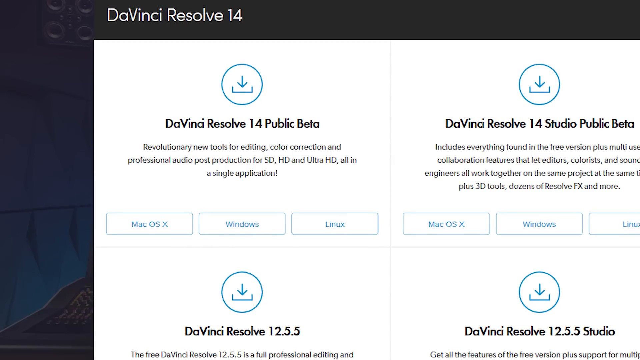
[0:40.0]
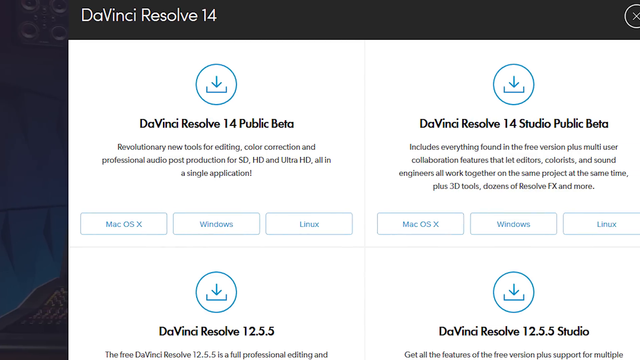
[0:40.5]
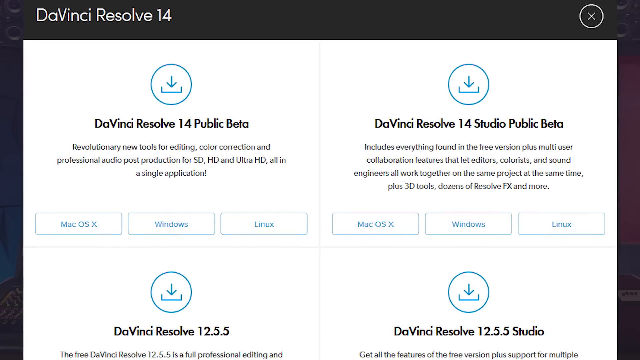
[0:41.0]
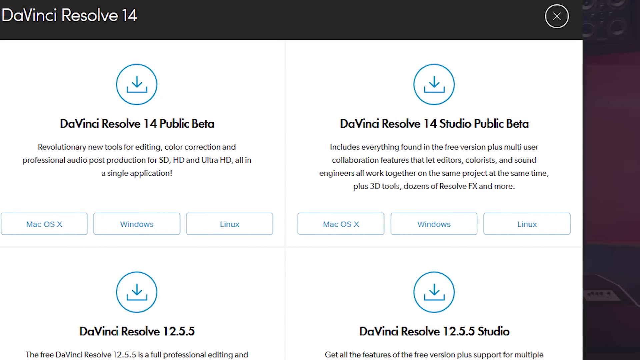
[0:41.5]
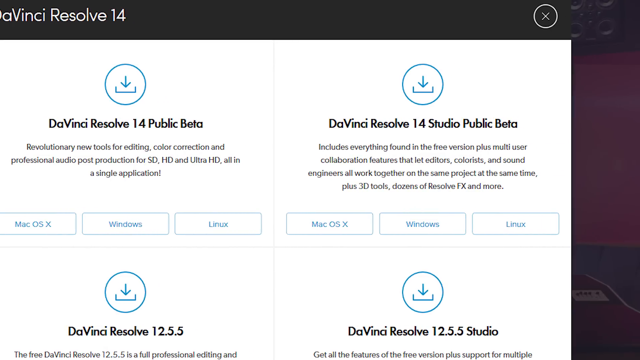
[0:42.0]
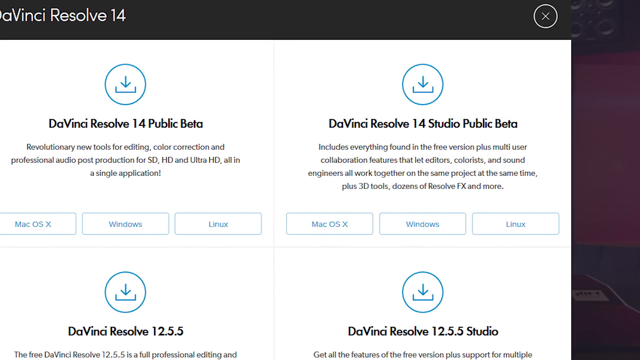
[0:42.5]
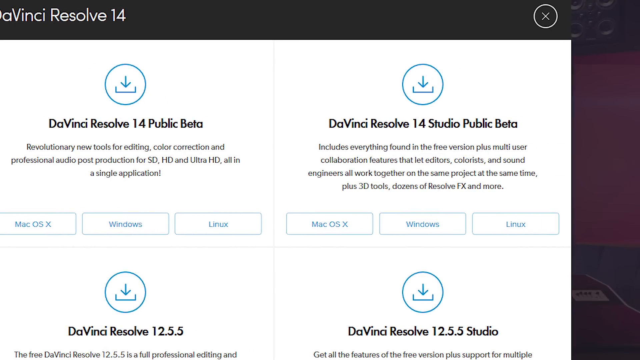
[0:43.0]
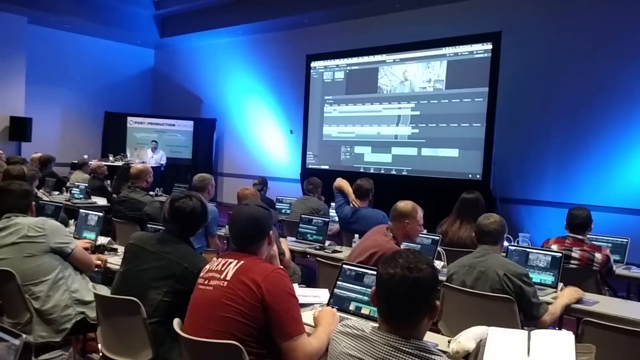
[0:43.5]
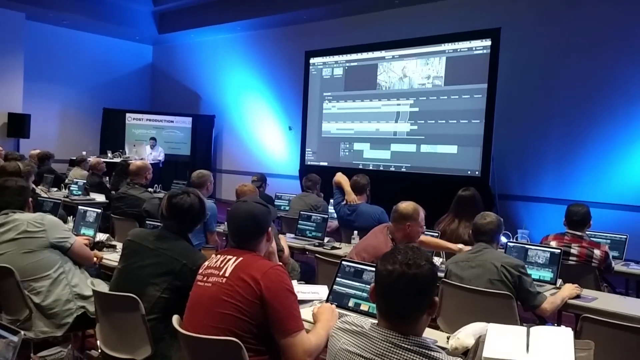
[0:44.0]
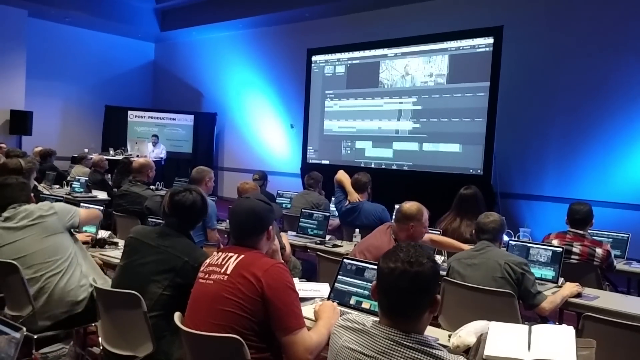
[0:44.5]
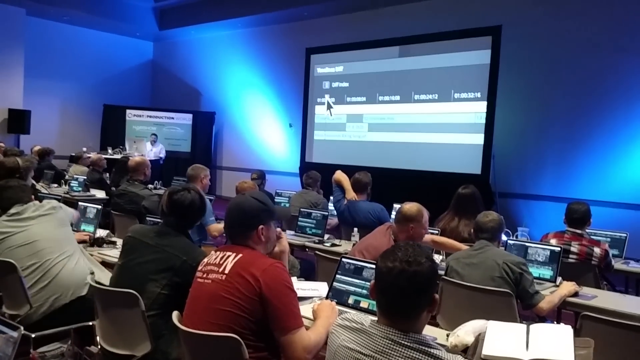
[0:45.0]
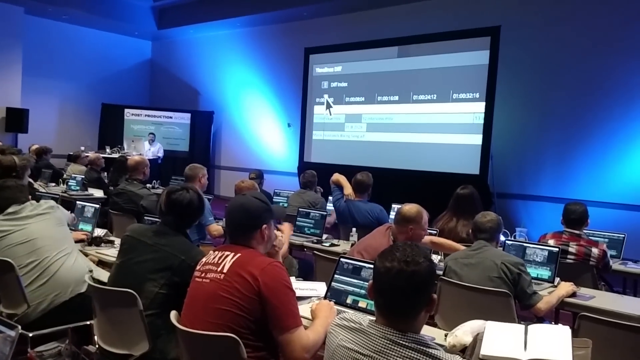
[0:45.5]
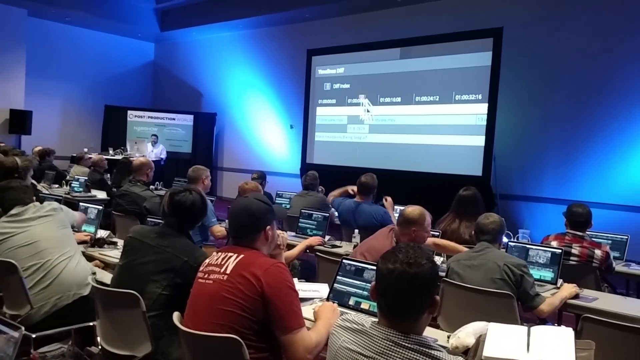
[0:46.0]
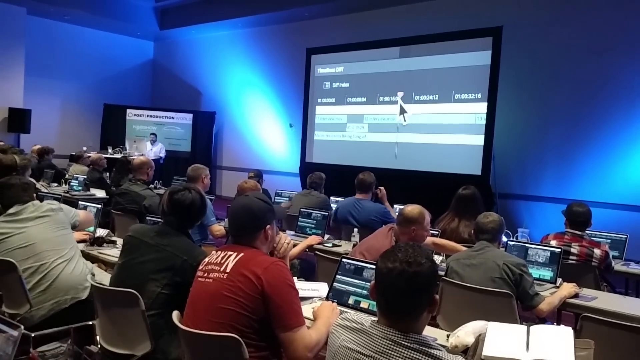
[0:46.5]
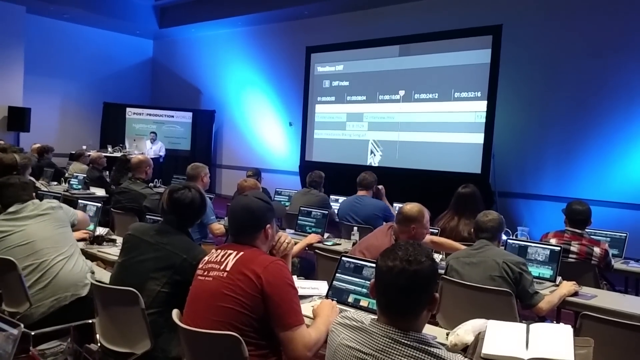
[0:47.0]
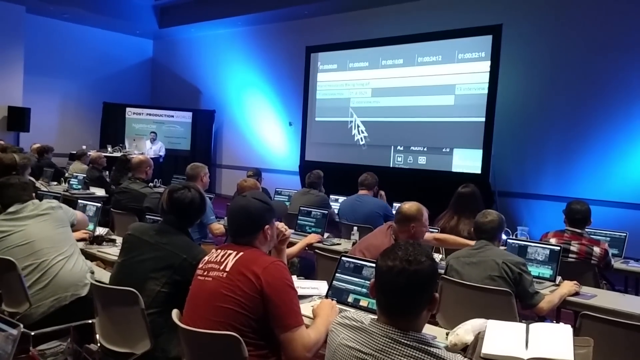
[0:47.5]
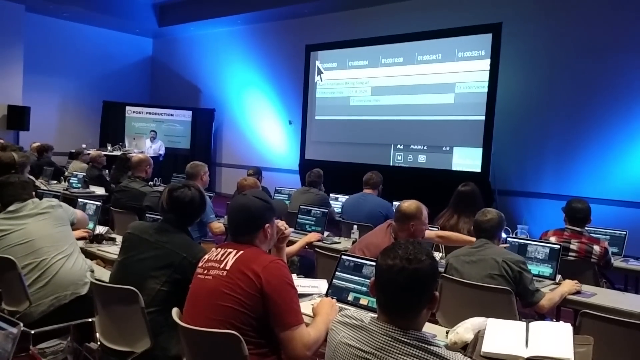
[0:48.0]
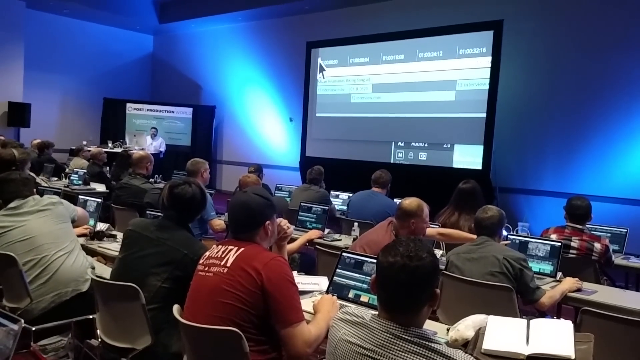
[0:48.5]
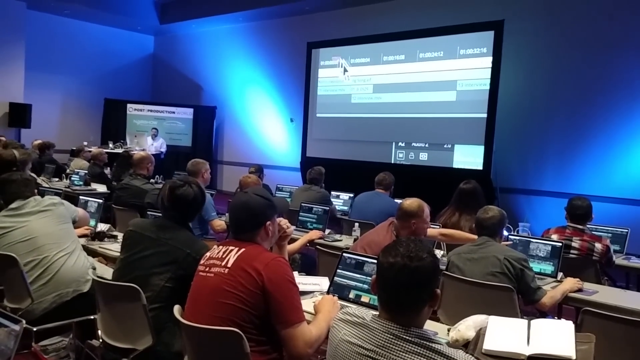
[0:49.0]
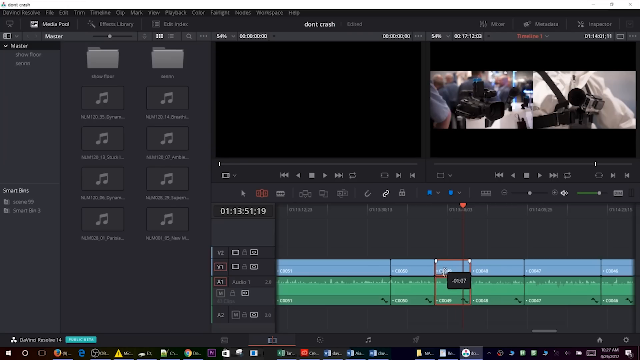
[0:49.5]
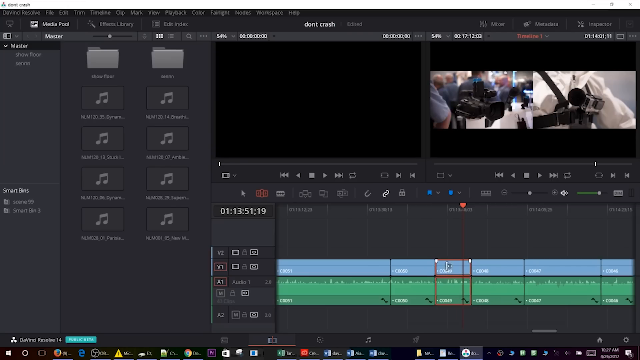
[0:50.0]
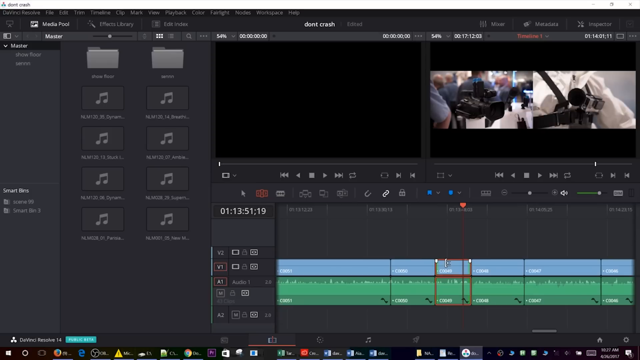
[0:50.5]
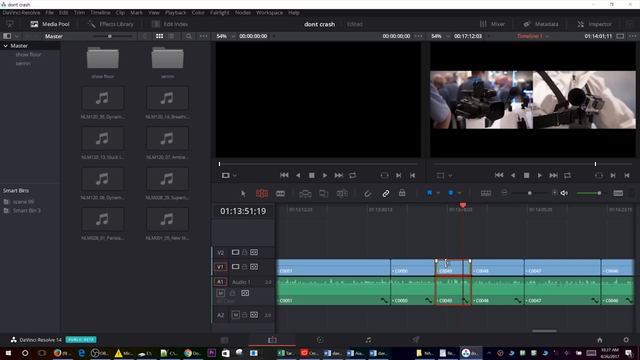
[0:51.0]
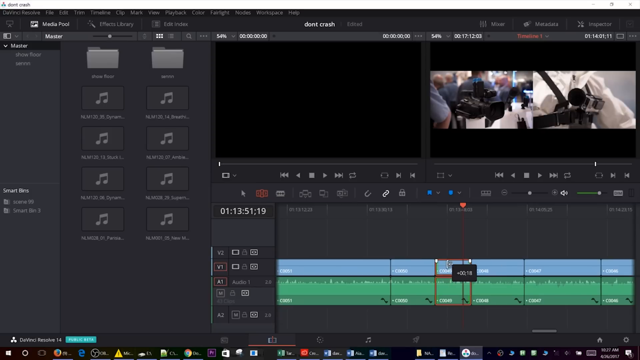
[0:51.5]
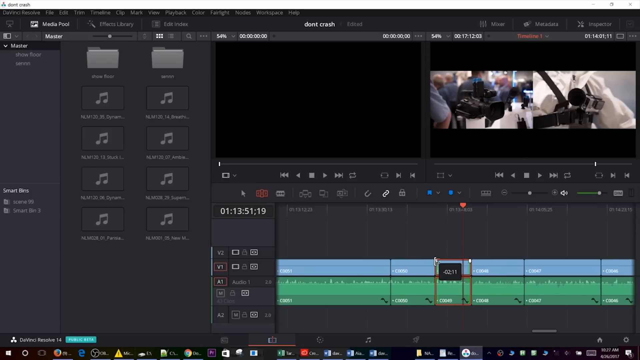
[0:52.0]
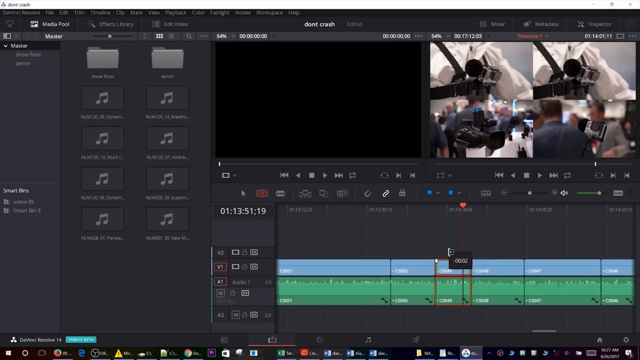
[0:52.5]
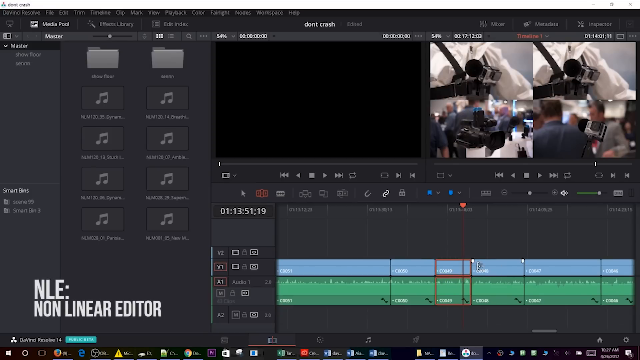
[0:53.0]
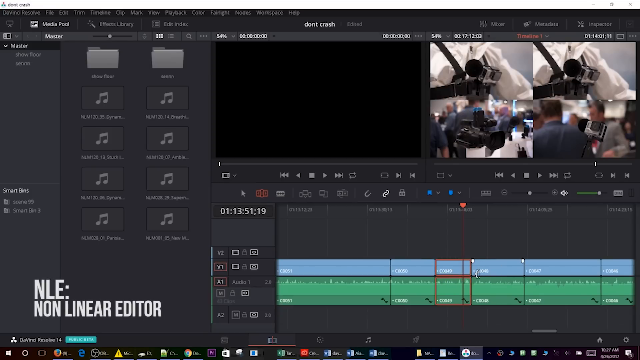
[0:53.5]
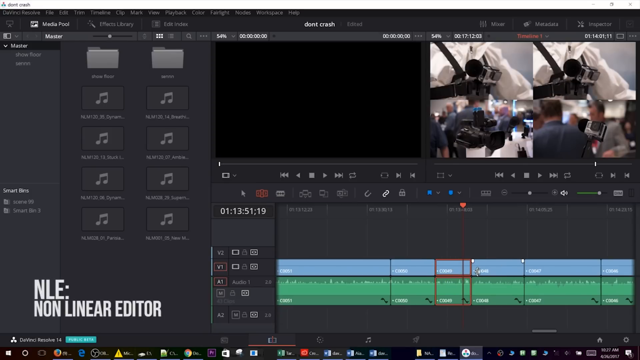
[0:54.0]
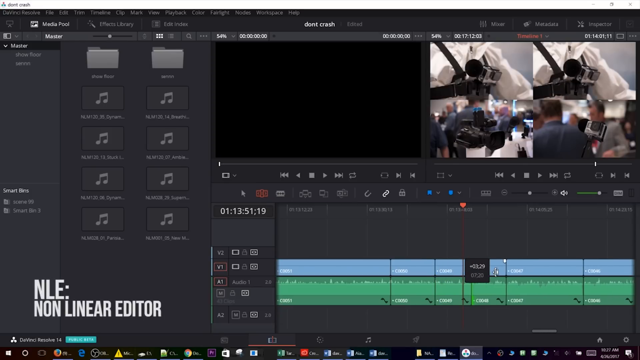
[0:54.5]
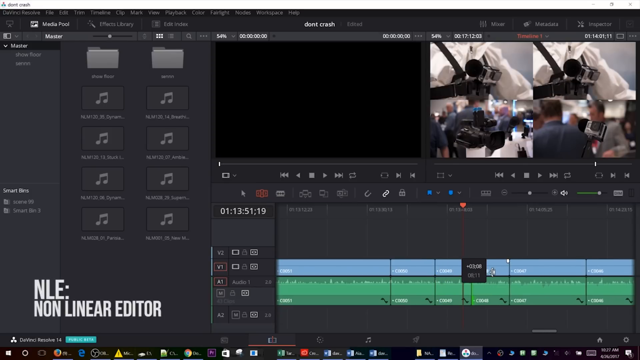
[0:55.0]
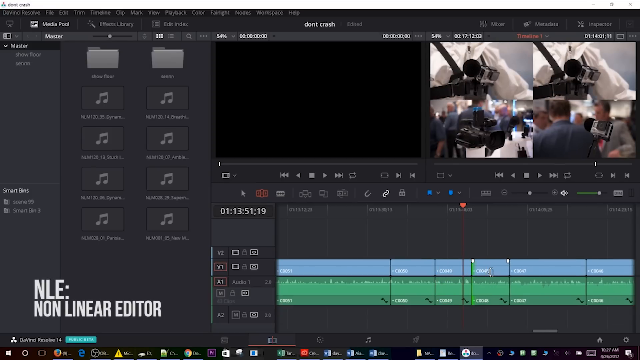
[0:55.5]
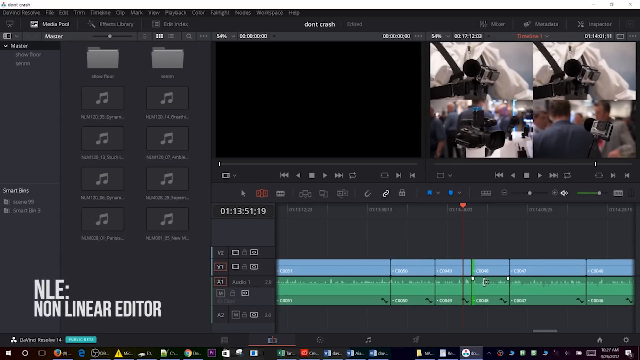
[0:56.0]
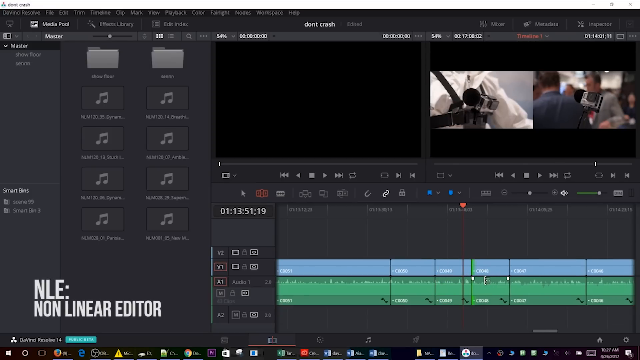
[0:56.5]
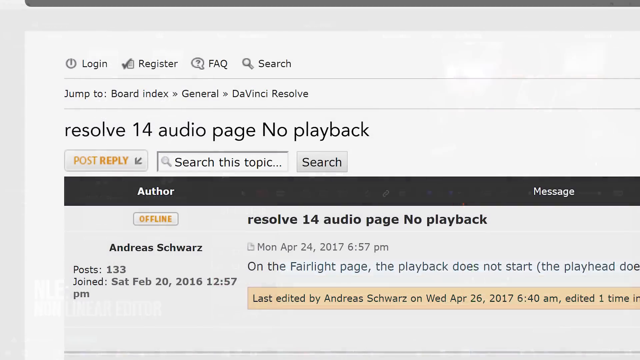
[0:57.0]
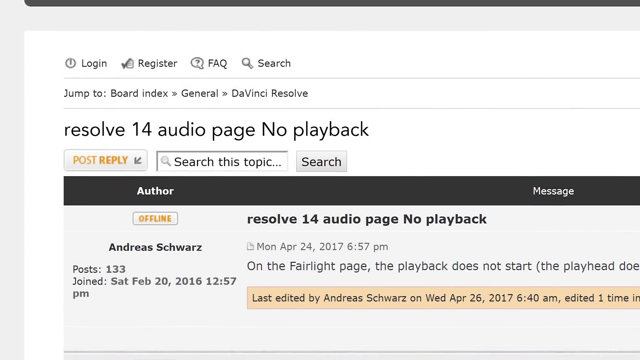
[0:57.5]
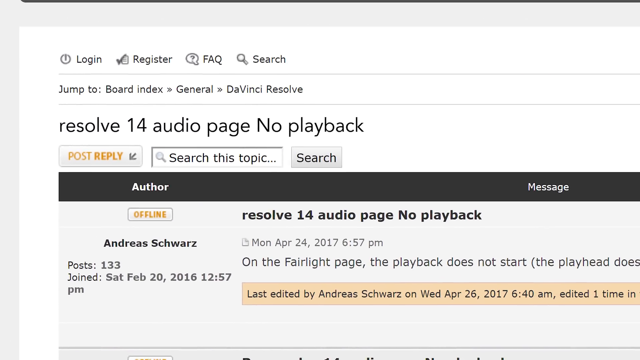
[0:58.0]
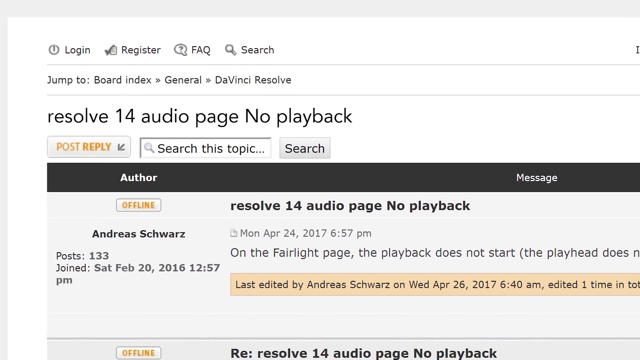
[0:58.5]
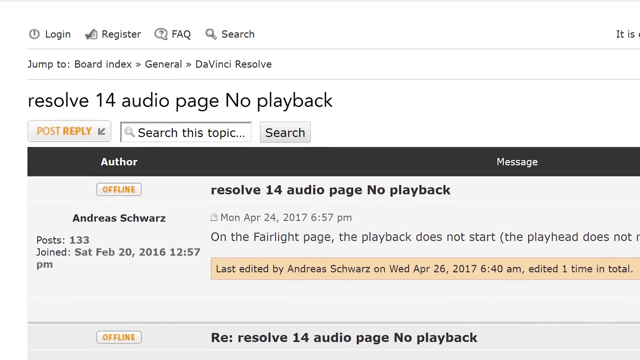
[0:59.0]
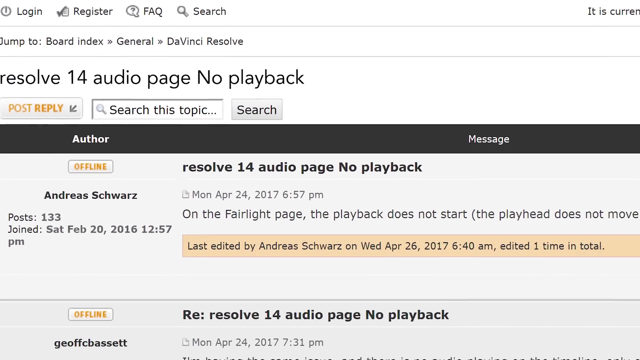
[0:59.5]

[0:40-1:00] Tech people seem to be sitting in the control room, busy controlling or setting up the screens, apparently getting ready to present to the gathered people. They seem to be controlling what will be shown on their screens, which apparently include a studio public theatre. The people are still waiting patiently. There seems to be a panel working, and its members seem to understand each other as they are calm.